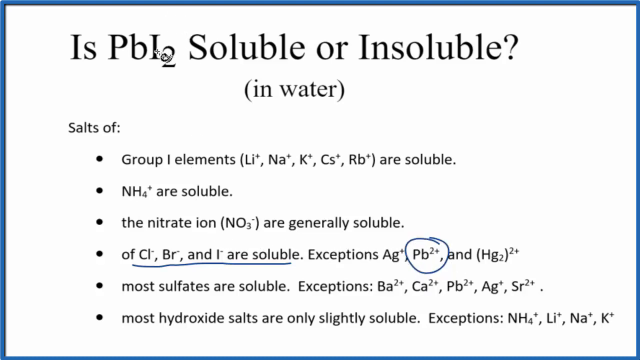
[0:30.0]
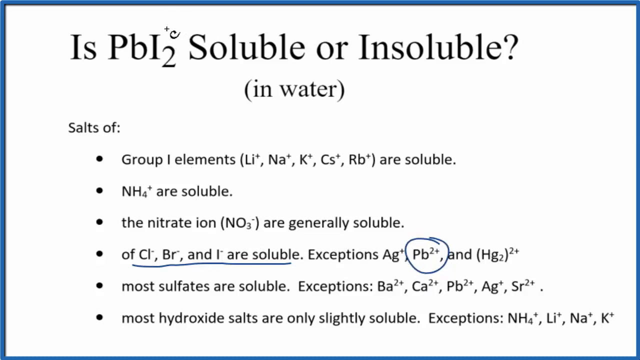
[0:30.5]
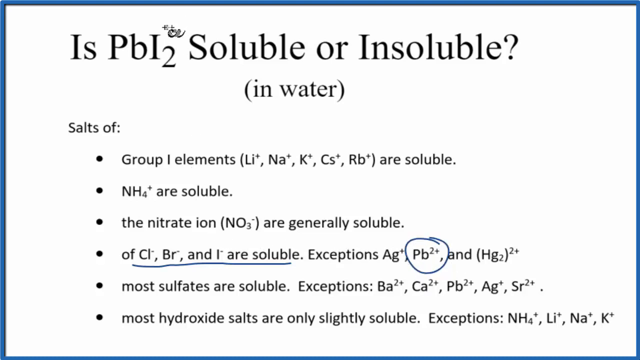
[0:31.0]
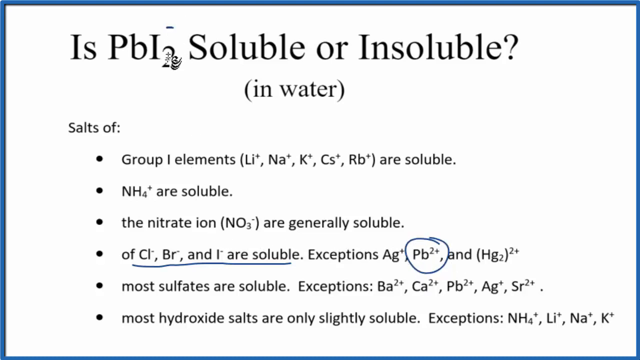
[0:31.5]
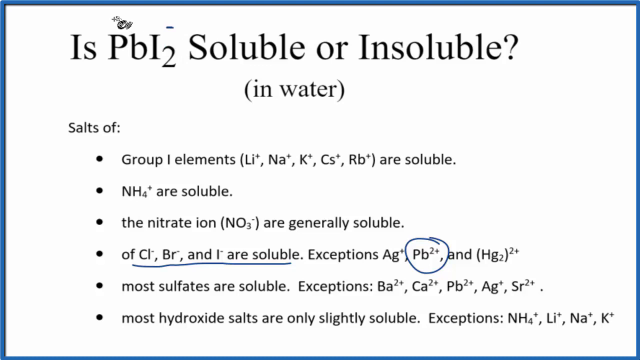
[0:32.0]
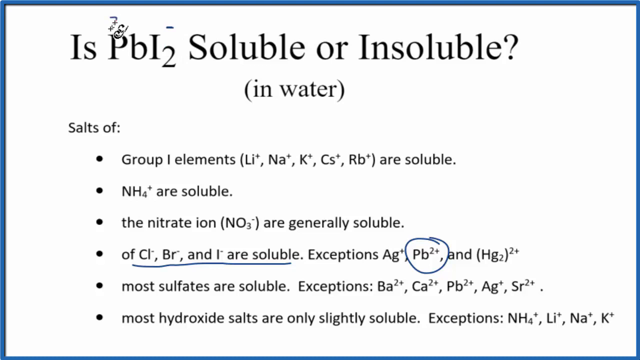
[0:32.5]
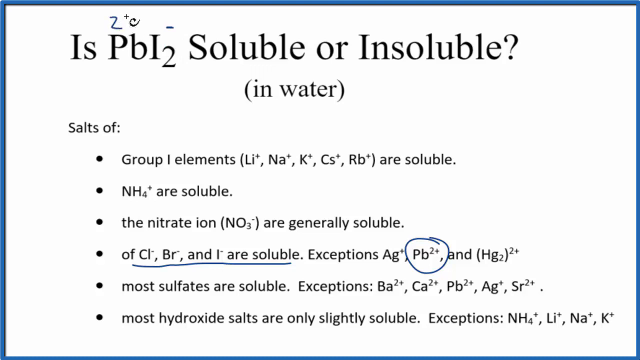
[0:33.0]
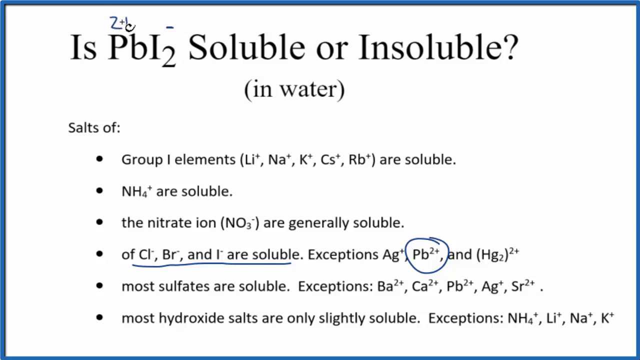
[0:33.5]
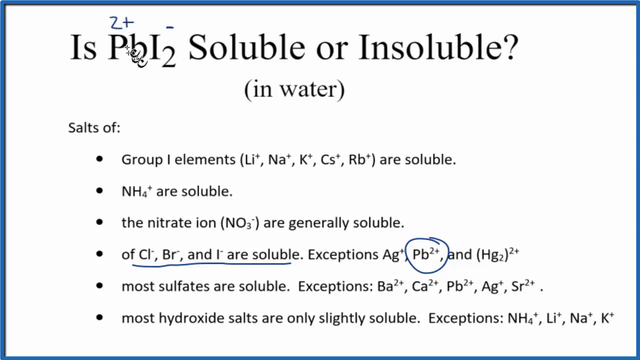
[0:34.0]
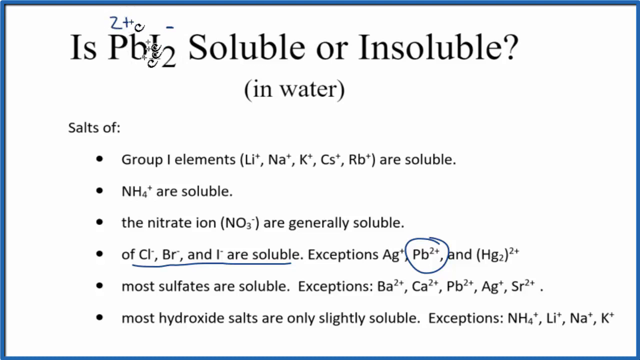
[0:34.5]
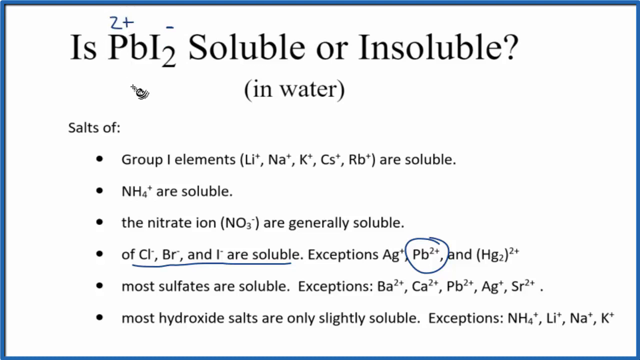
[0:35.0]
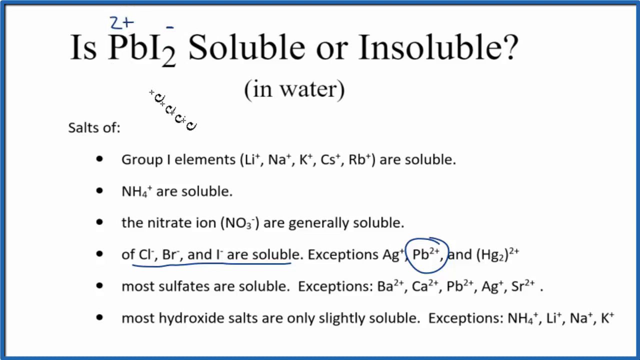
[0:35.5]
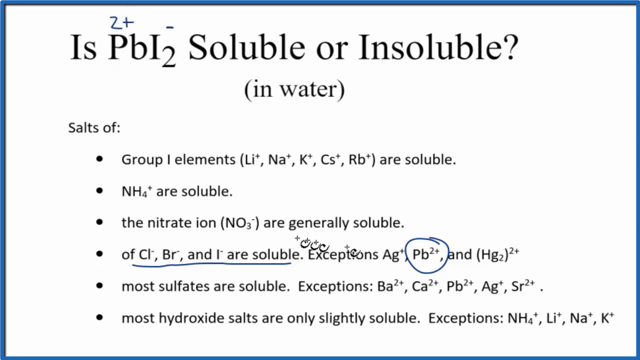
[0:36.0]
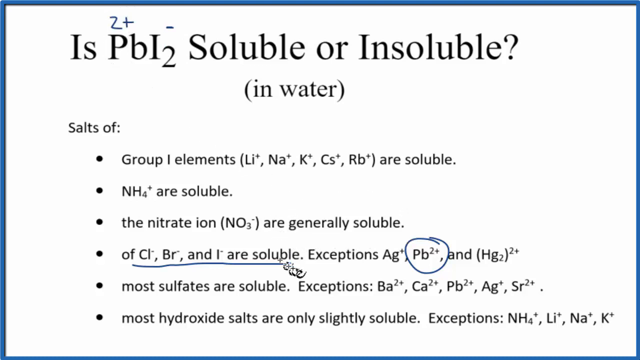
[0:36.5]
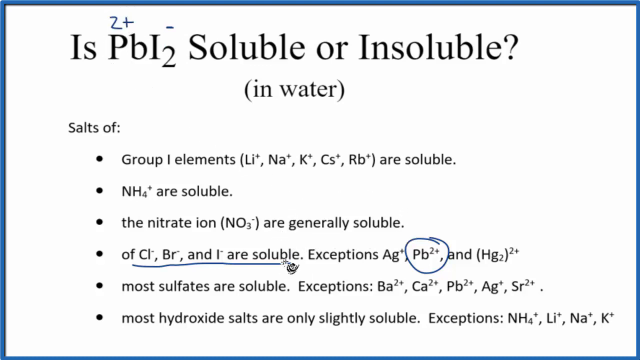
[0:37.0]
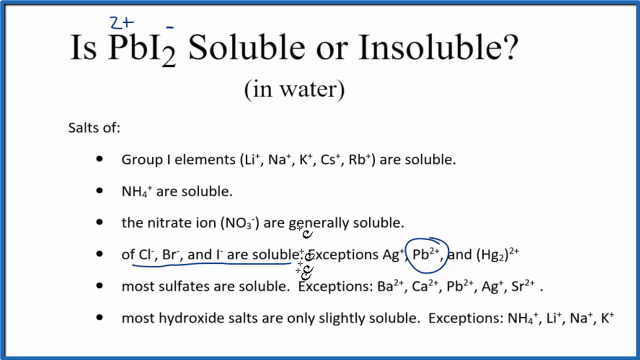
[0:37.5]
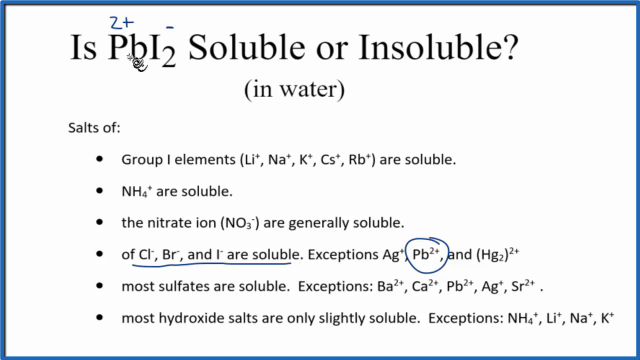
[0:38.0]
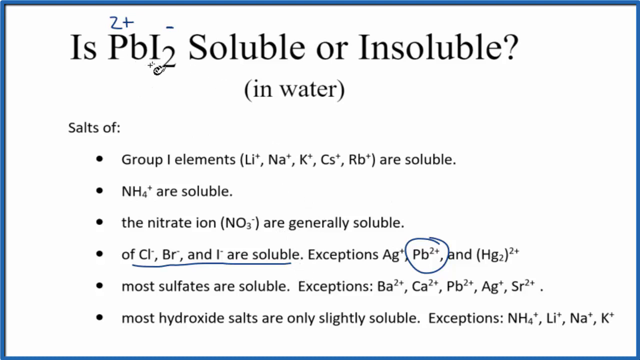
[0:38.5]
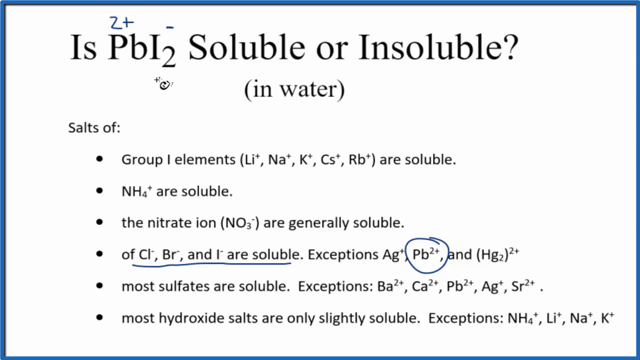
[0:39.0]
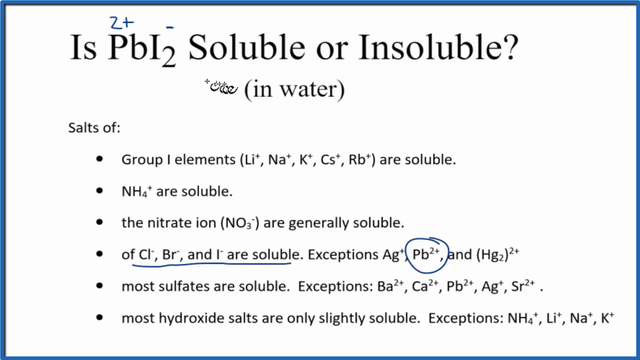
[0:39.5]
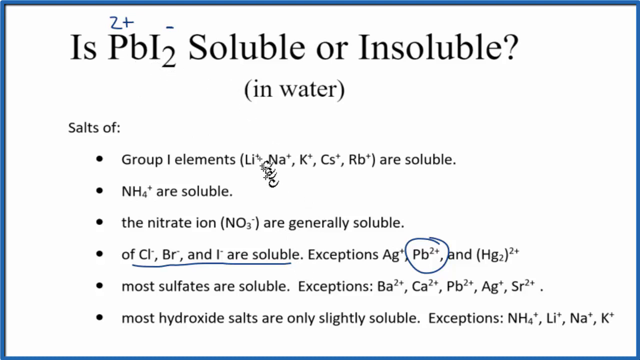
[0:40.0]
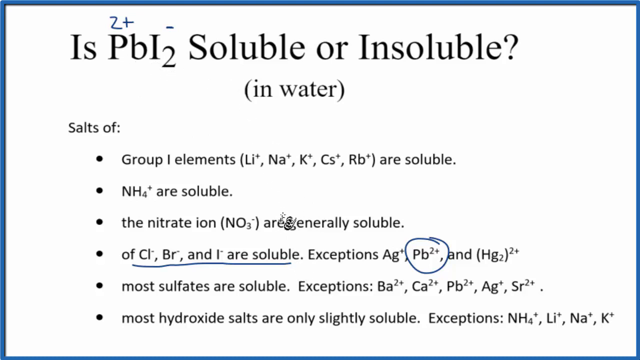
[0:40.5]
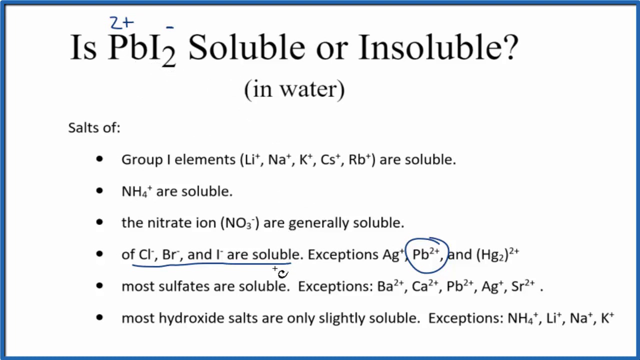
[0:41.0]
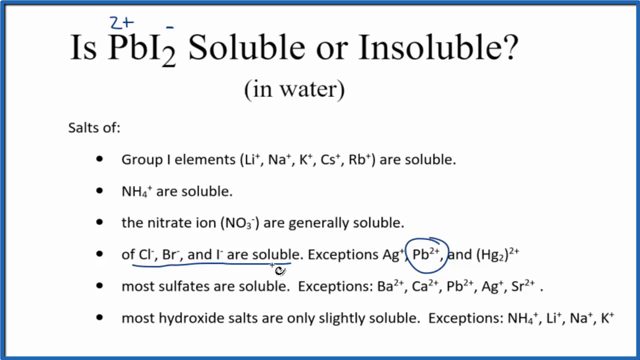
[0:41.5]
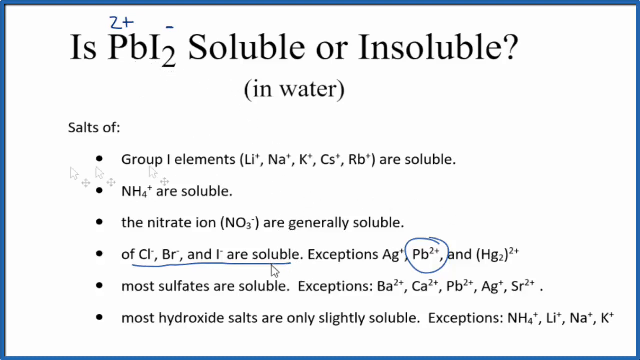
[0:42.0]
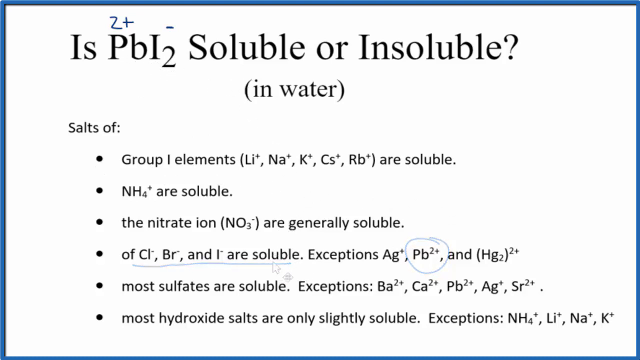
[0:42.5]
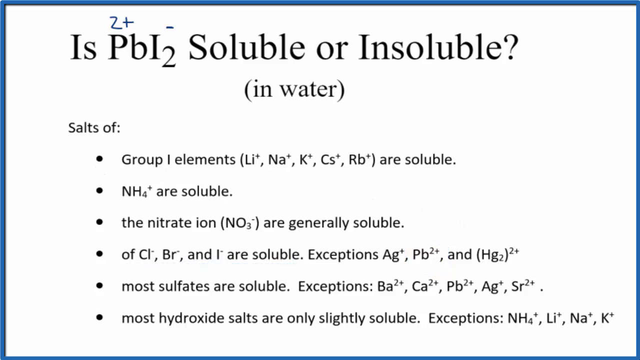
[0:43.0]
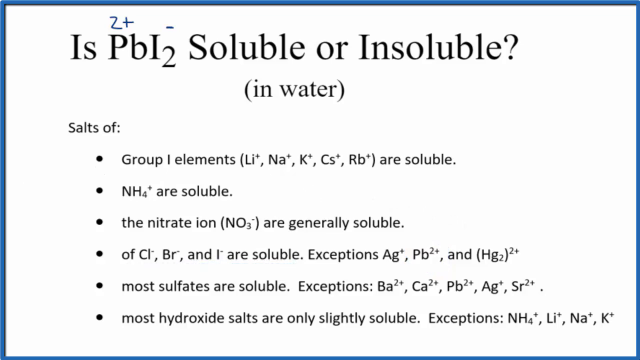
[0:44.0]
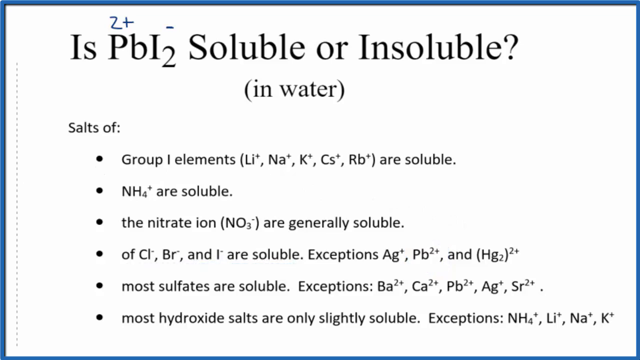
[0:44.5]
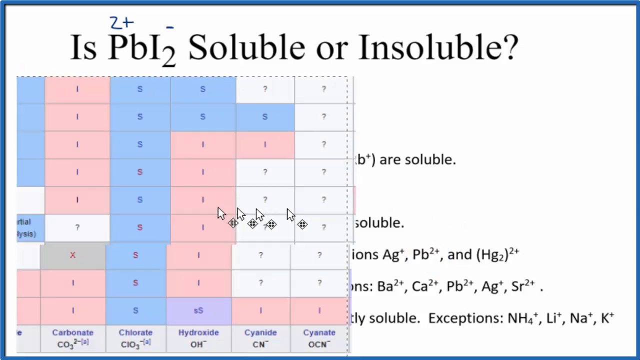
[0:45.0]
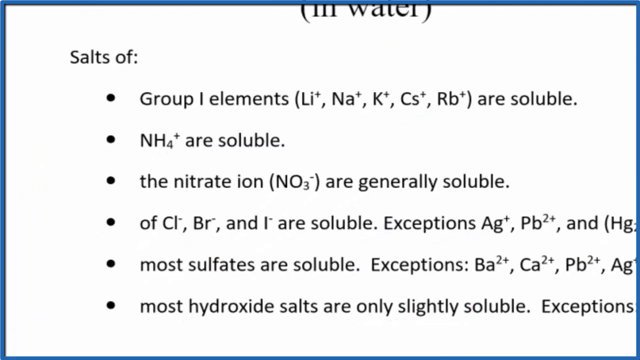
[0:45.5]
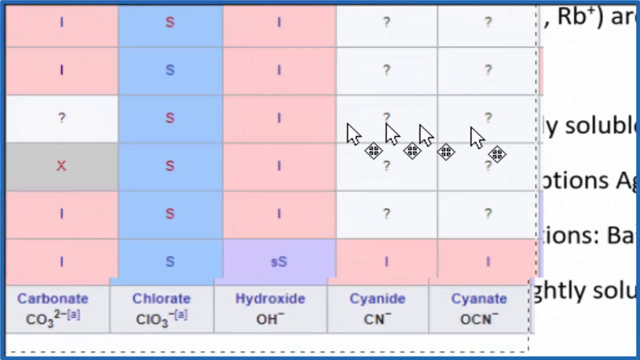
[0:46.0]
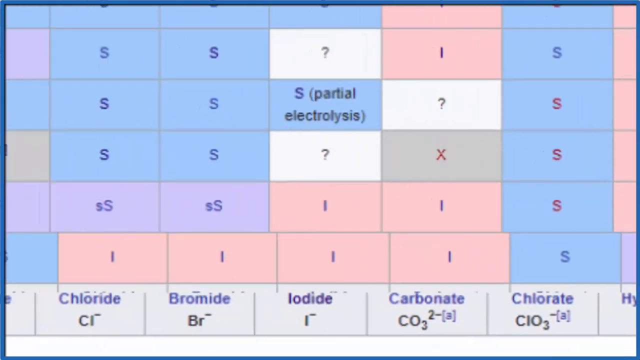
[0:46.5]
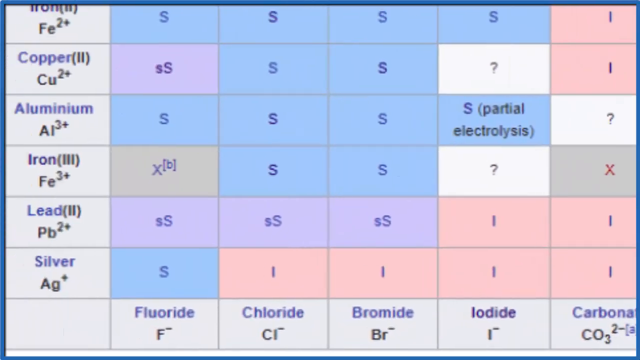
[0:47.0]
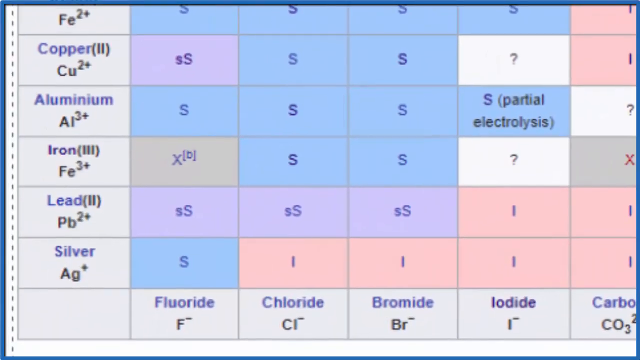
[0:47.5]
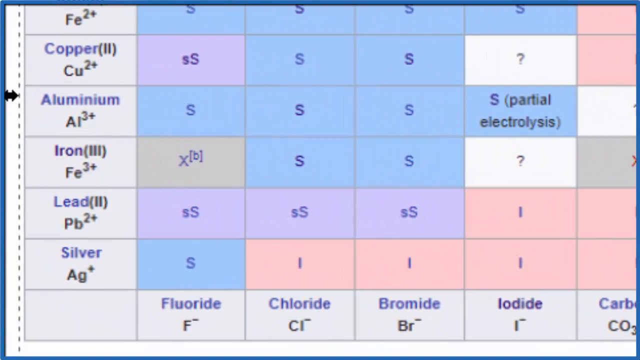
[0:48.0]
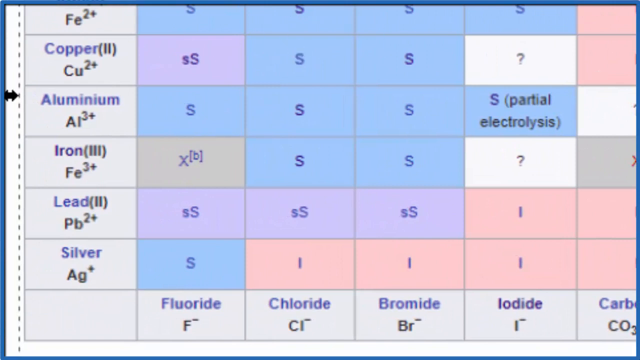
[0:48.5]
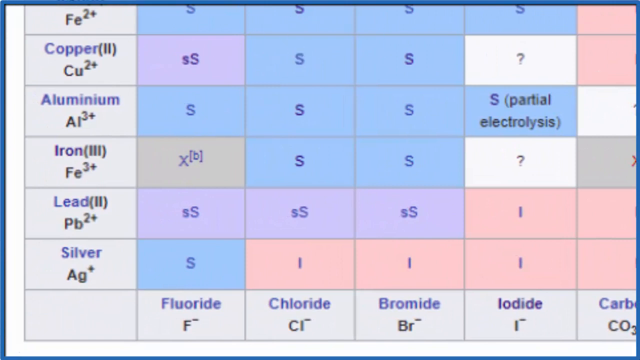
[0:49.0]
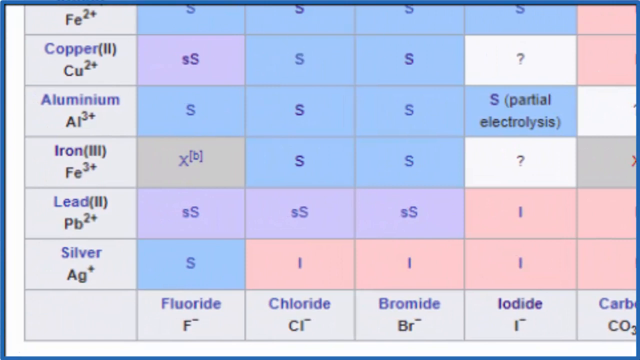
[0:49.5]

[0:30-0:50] The white background with black text remains. The top reads "is PbI2 soluble or insoluble?", with "in water" in parentheses underneath, then "salt of:" followed by six bullet points: "group I elements Li+, Na+, K+, Cs+, Rb+, are soluble"; "NH4+ are soluble"; "the nitrate ion, NO3-, are generally soluble"; "of Cl-, Br-, and I- are soluble. Exceptions, Ag+, Pb2+, and Hg2 2+"; "most sulfates are soluble. Exceptions, Ba2+, Ca2+, Pb2+, Ag+, Sr2+"; and "most hydroxide salts are only slightly soluble. Exceptions, NH4+, Li+, Na+, K+". On the fourth bullet point there is a blue underline beneath "Cl-, Br-, and I- are soluble" and a blue circle around "Pb2+" in the exceptions. The mouse cursor looks like a plus sign with a squiggly circle at its bottom right. It appears to make a minus over the "I2" of the title, writes a "2+" over the "Pb" of the title, and makes a counterclockwise circle around it. It moves down toward the fourth line, back up to "PbI2", and down again to the fourth line where "Cl-, Br-, and I- are soluble" is underlined. The cursor then apparently moves to the left side and drags a table over from left to right. The table has many rectangles; its left side reads "Fe2+", "copper 2", "aluminum", "iron 3", "lead 2" and "silver", and there are many S's, SS's and I's, plus white rectangles with question marks.